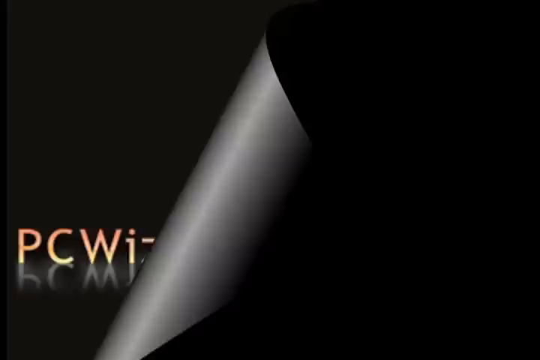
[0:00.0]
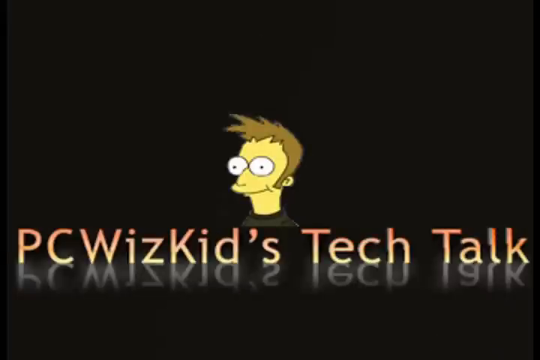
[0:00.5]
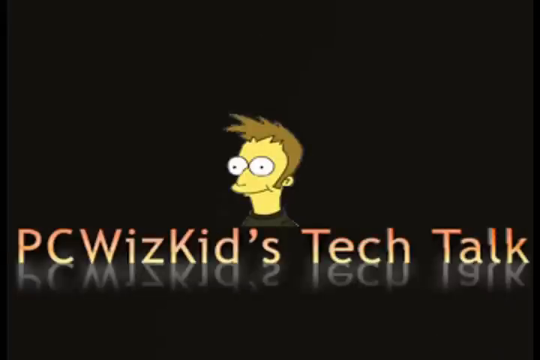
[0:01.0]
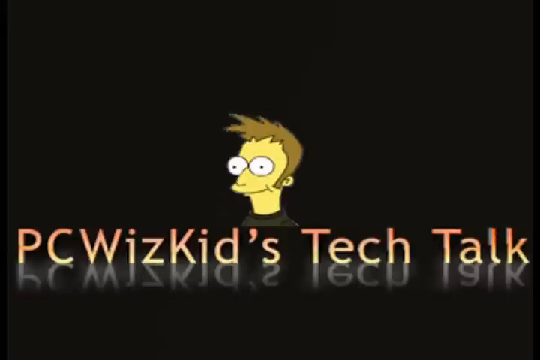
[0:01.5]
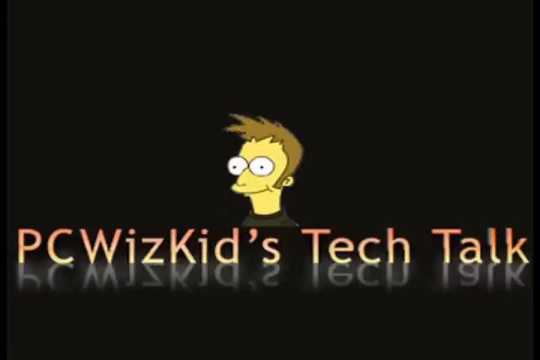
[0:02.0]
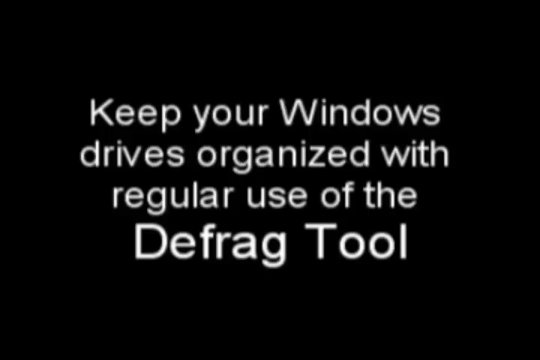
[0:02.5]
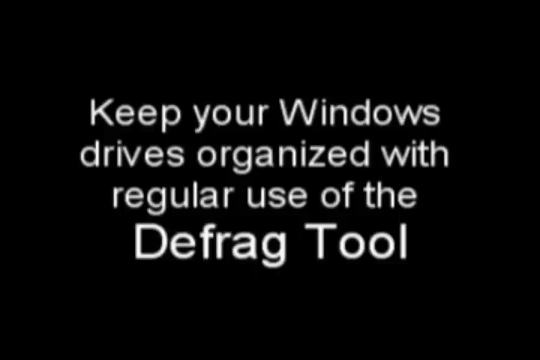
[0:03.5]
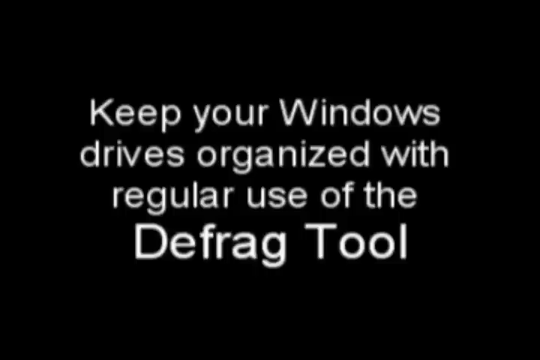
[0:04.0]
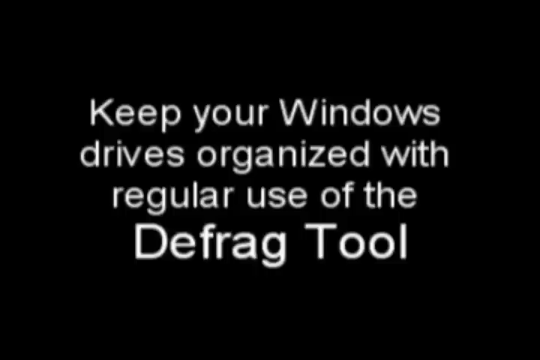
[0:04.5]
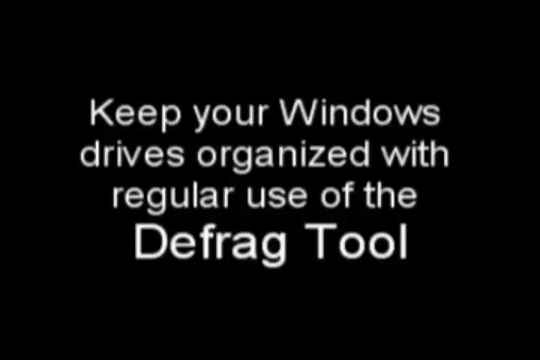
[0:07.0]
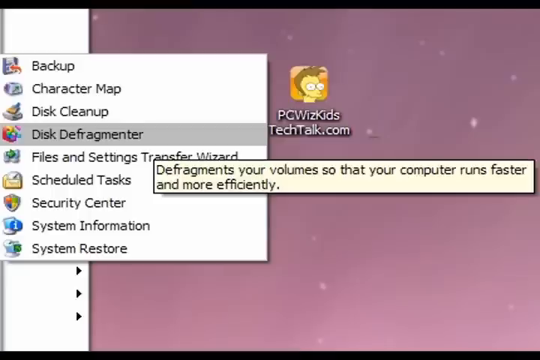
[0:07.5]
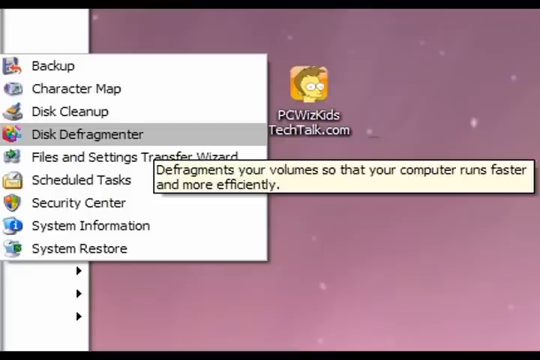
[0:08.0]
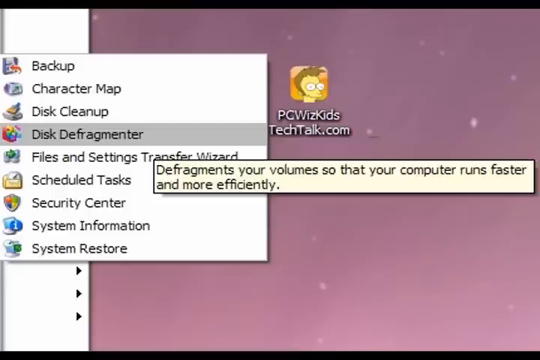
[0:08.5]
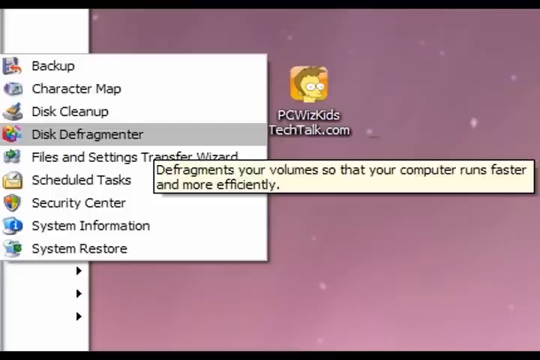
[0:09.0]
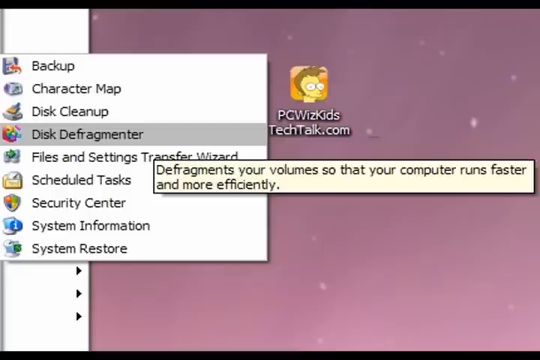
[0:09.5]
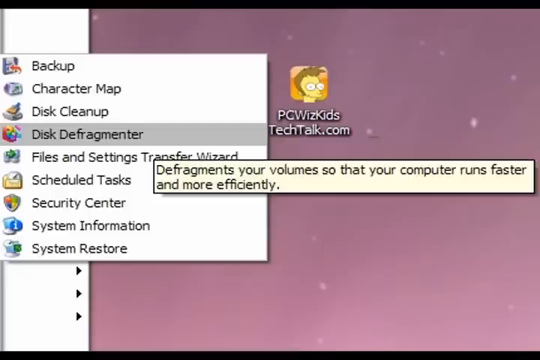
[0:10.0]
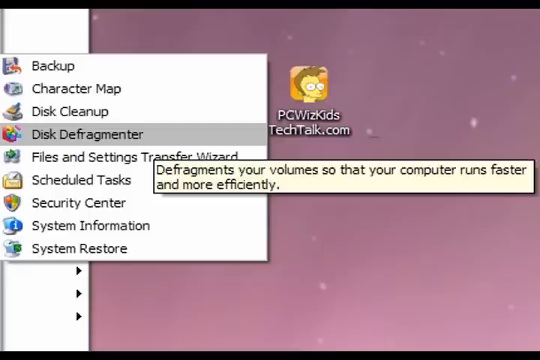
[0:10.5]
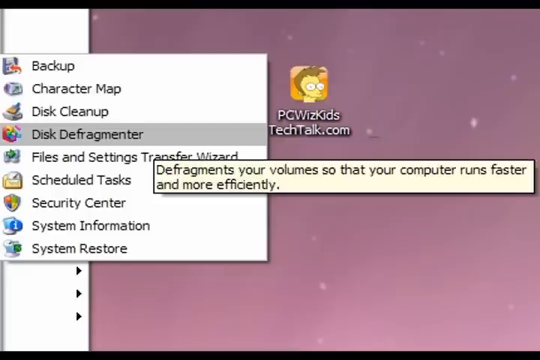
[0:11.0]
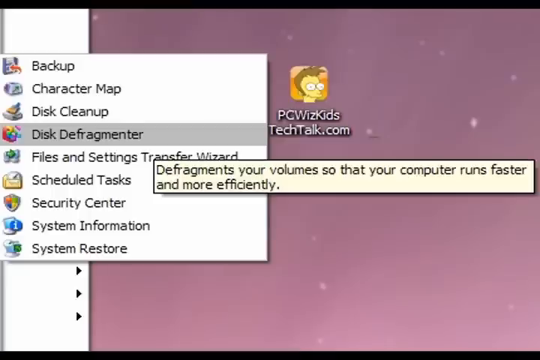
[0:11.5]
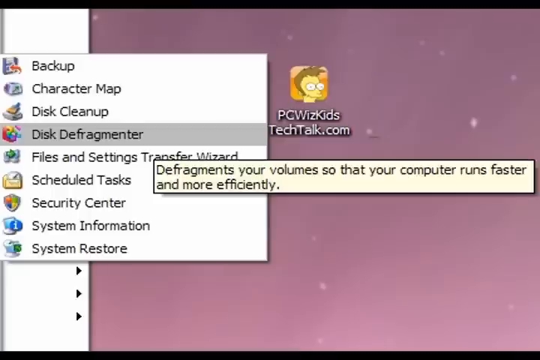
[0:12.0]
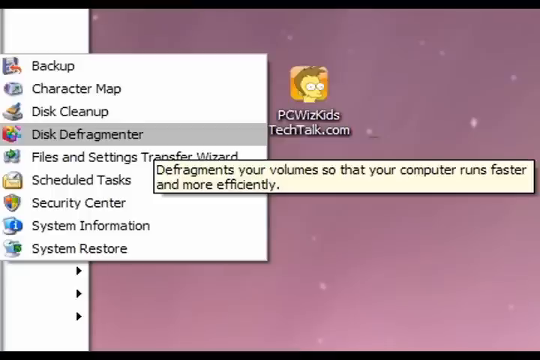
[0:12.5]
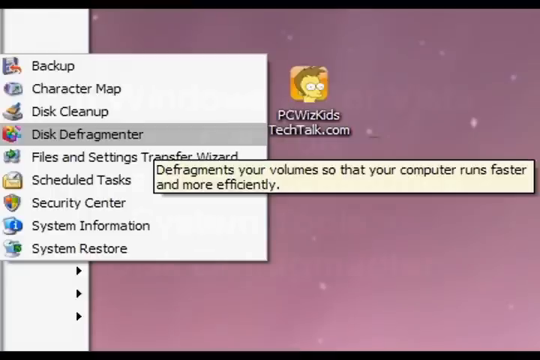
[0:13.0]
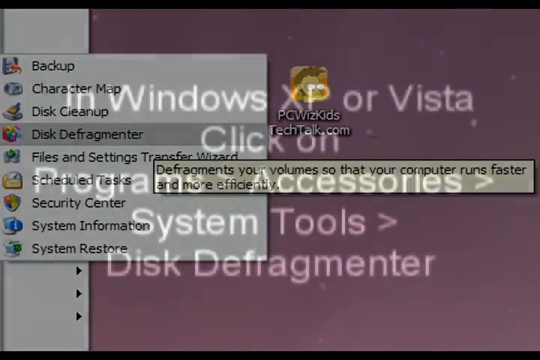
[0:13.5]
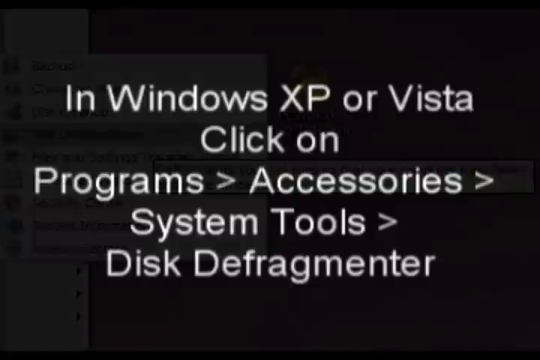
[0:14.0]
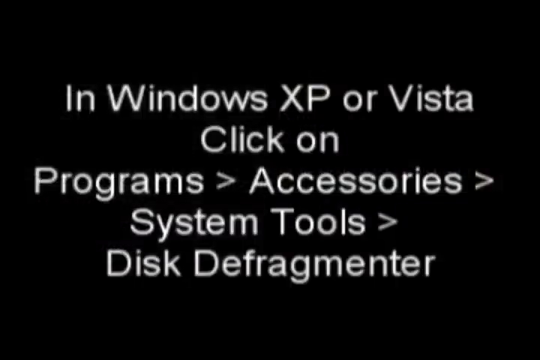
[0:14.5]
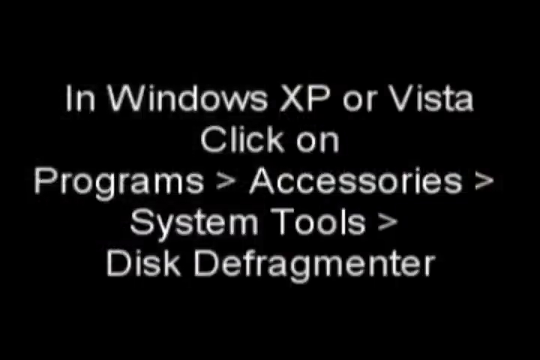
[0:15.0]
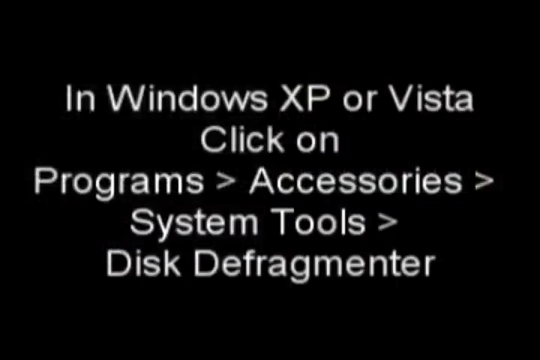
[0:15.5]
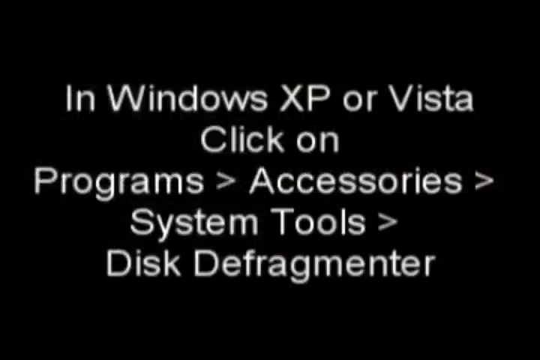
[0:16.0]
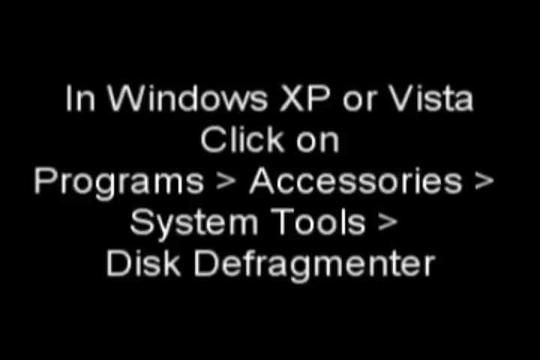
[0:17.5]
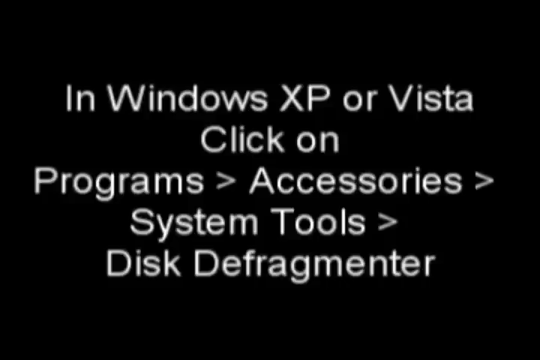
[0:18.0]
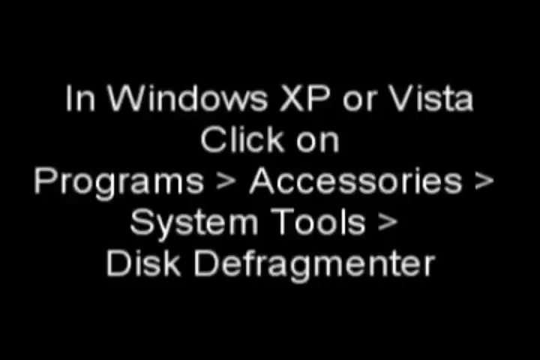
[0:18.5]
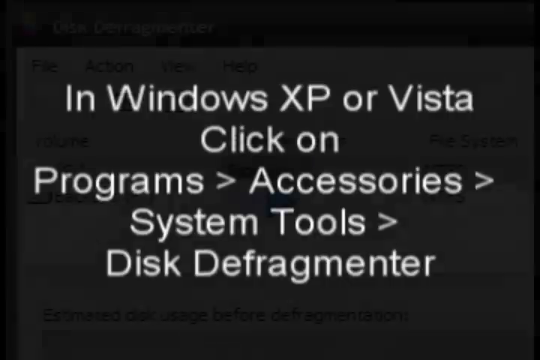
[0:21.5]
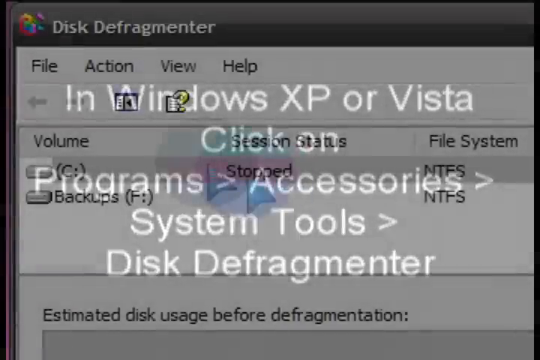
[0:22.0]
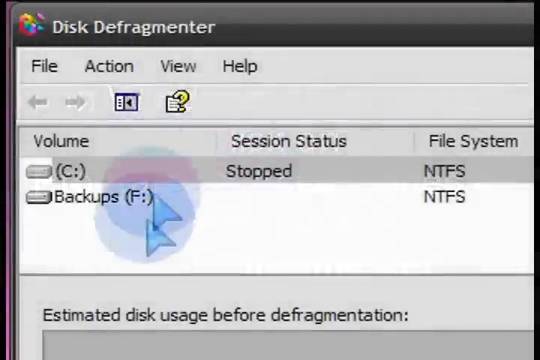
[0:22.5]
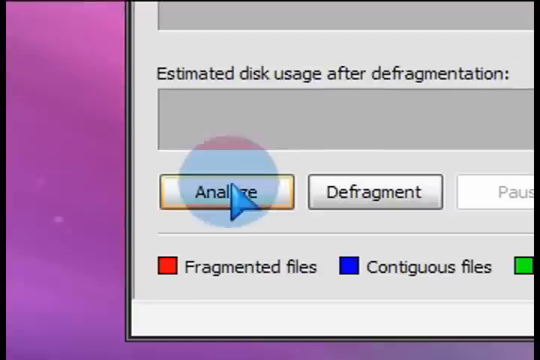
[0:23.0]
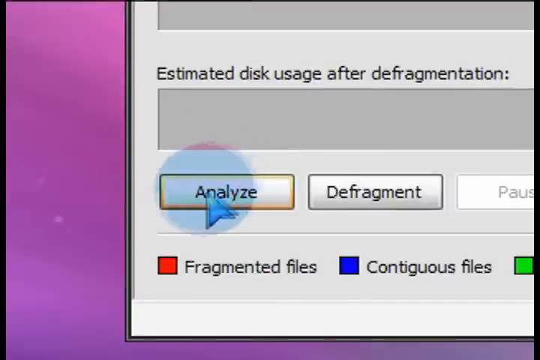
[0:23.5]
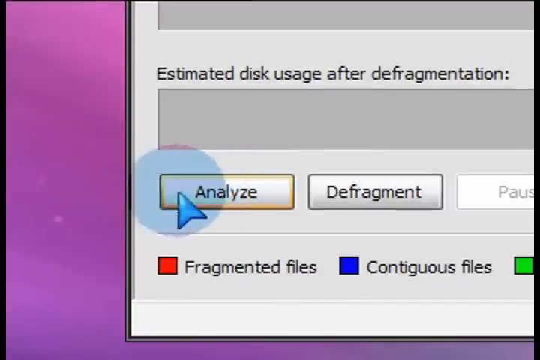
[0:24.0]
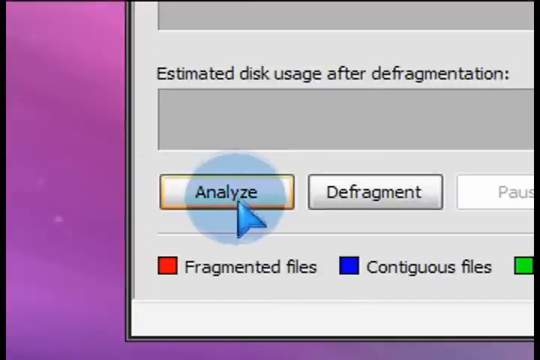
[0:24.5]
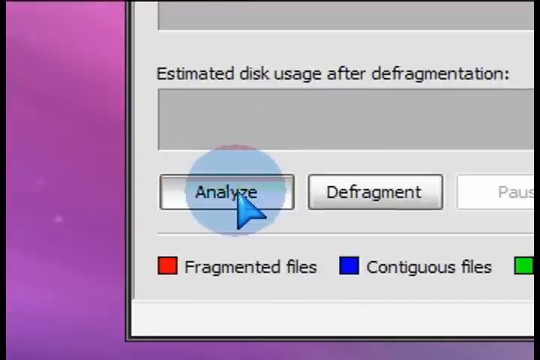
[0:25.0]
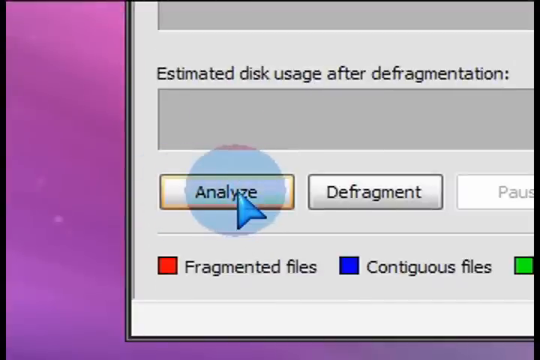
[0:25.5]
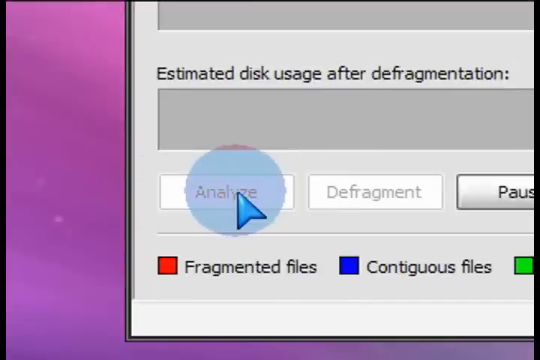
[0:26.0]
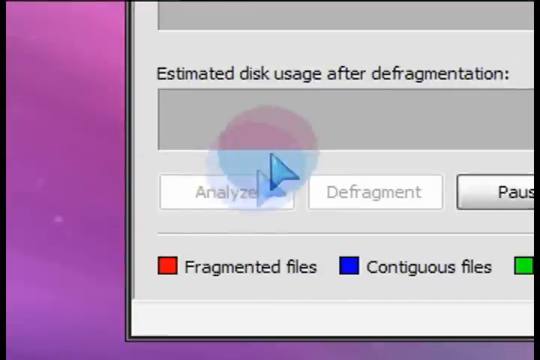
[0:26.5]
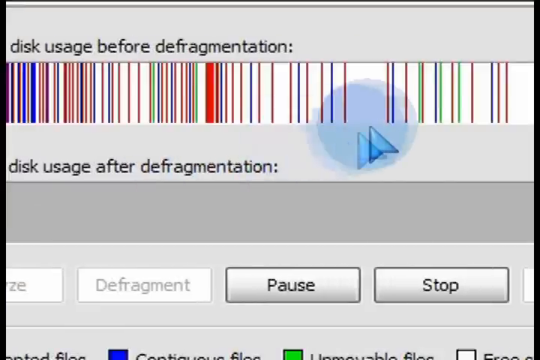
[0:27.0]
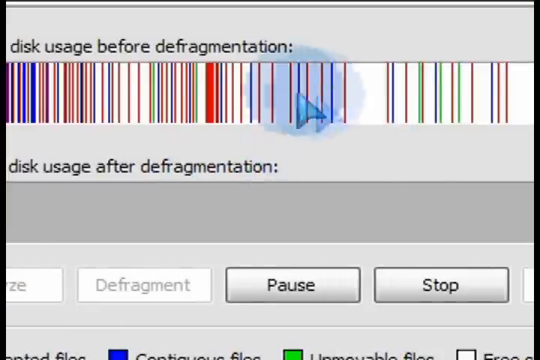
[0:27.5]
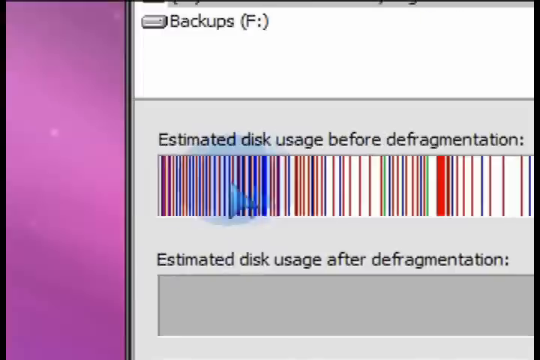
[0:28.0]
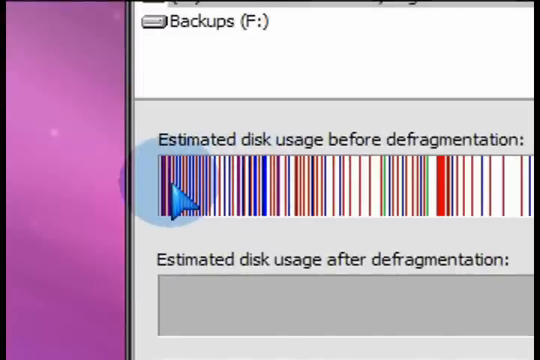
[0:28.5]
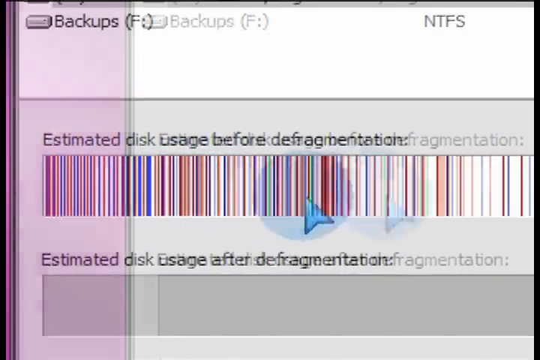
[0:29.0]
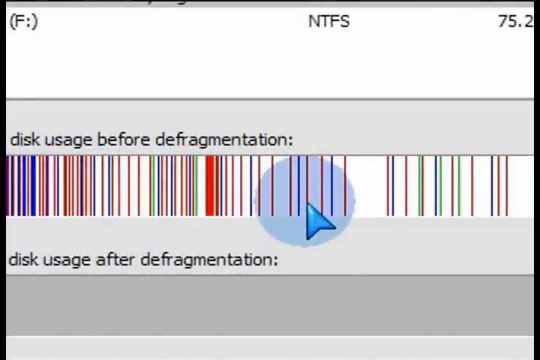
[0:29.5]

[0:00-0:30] A title for PC WizKids Tech Talk appears along with a cartoon in a yellow image. Text reads "keep your Windows drivers organized with regular use of the" followed by the name of a tool. A menu lists Backup, Character Map, Disk Cleanup, Disk Defragmenter, a transfer wizard, Scheduled Tasks, Security Center, System Information and System Restore. An inscription says "in Windows XP or Vista, click on Programs, Accessories, System Tools, and Disk Defragment." The Disk Defragmenter window then appears, with a colored logo in the top left corner and the menu items File, Action, View and Help. Its volume list shows C, marked as stopped, with NTFS, and a backups volume, F, also with NTFS. The user apparently clicks on Analyze.